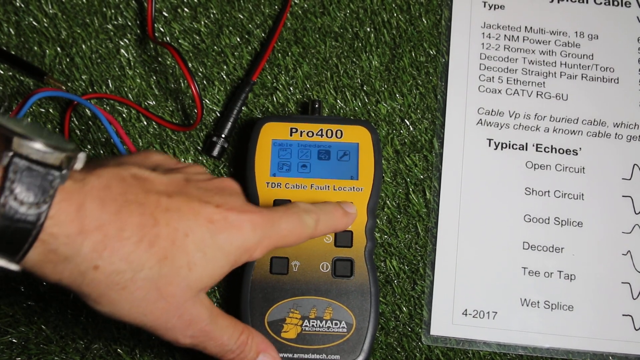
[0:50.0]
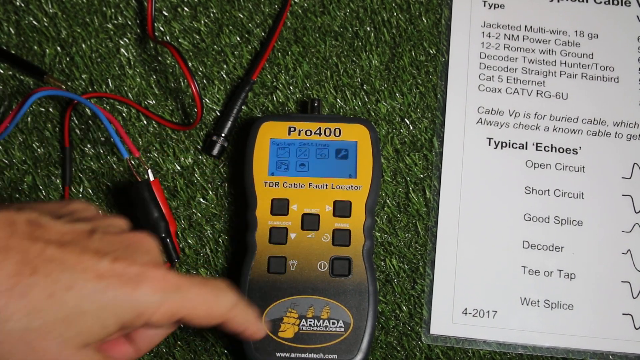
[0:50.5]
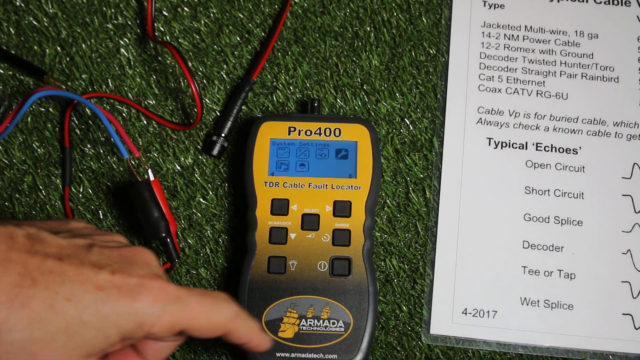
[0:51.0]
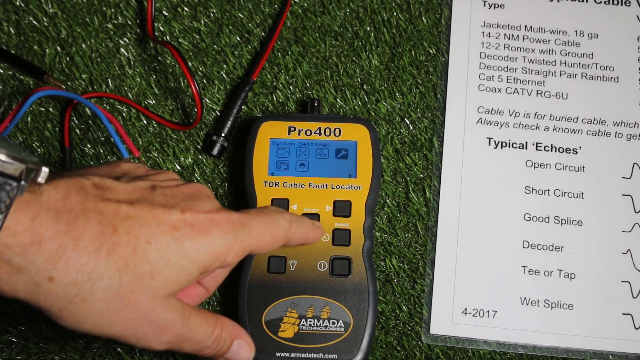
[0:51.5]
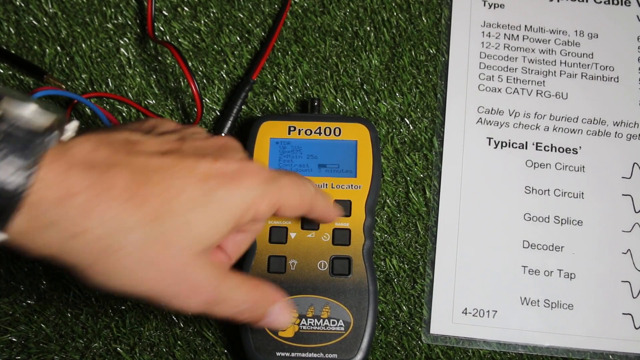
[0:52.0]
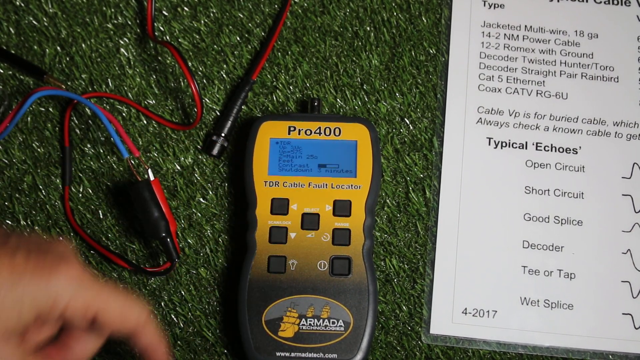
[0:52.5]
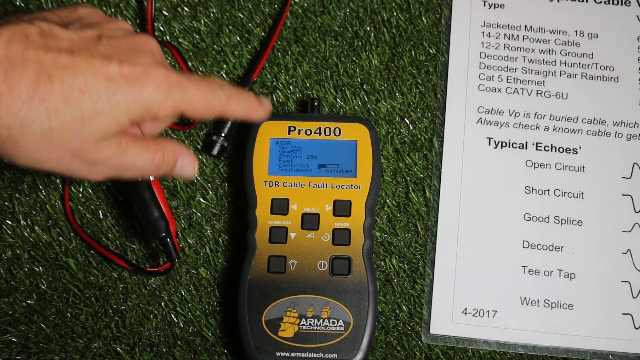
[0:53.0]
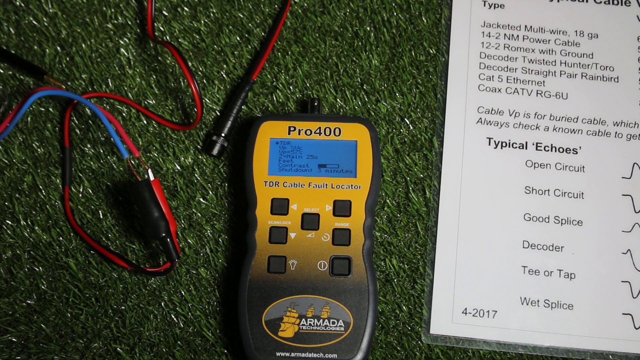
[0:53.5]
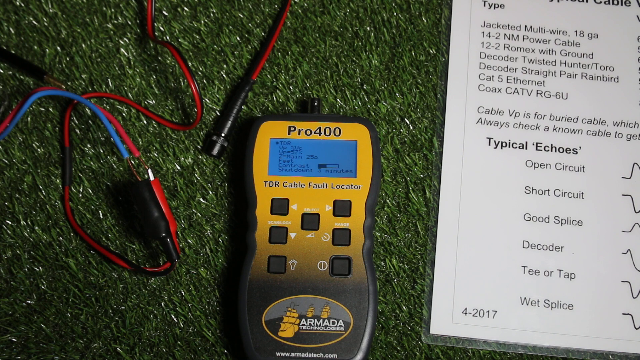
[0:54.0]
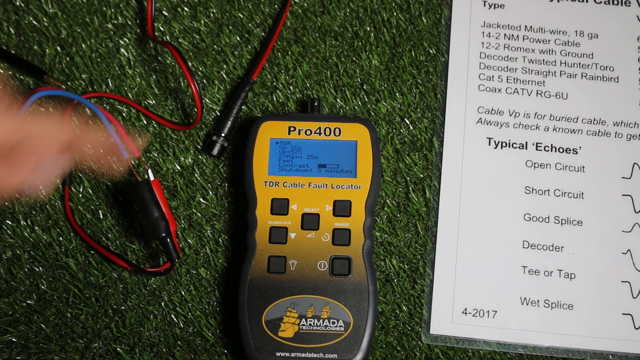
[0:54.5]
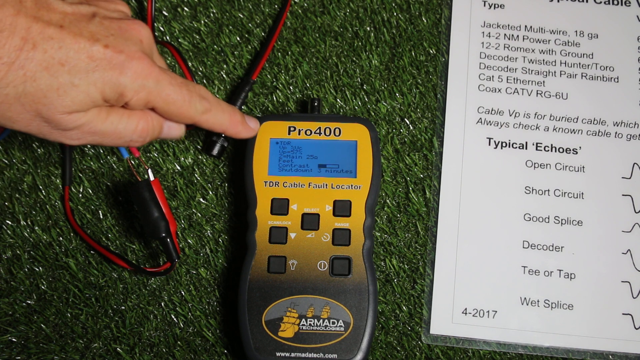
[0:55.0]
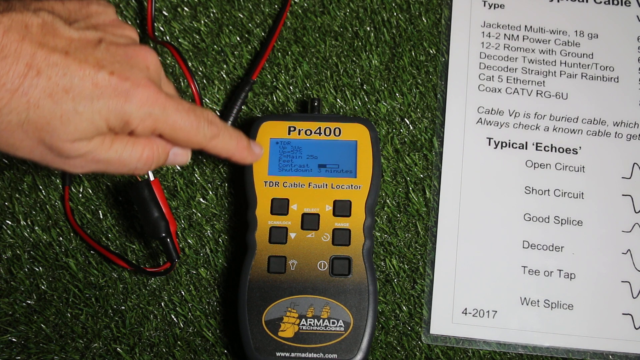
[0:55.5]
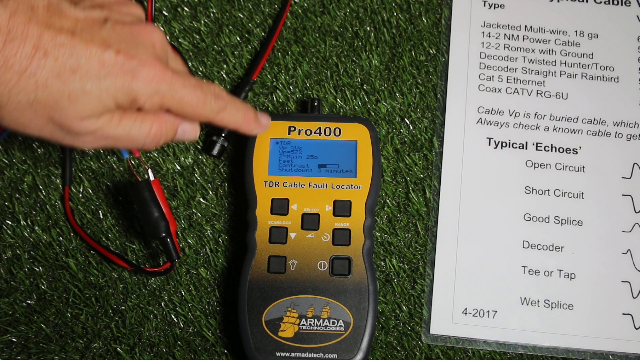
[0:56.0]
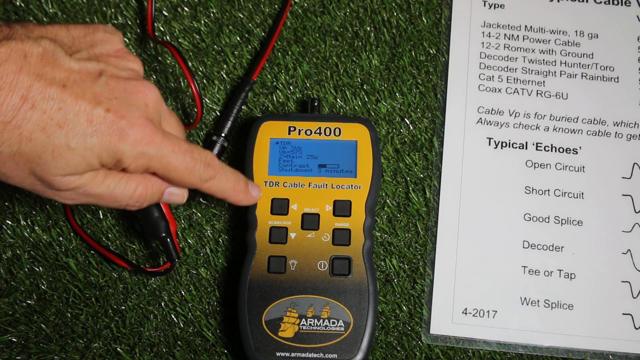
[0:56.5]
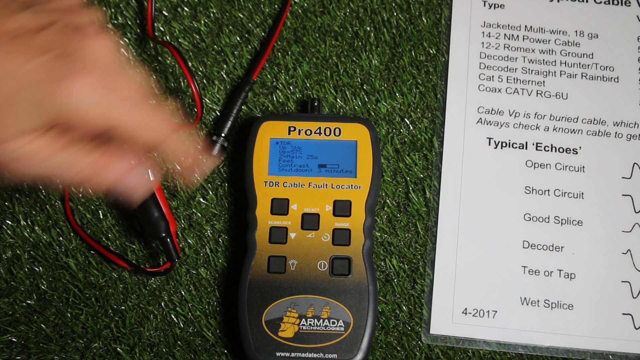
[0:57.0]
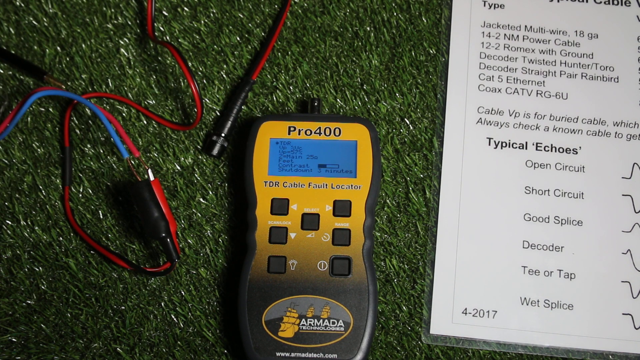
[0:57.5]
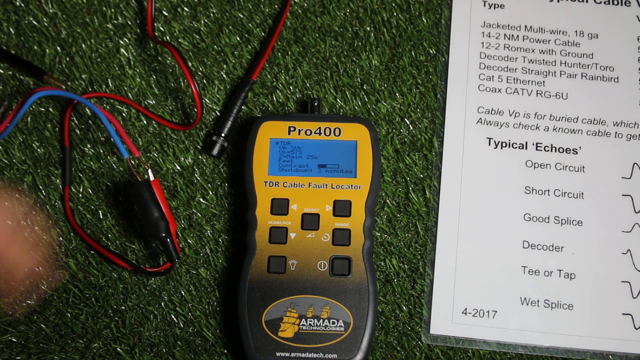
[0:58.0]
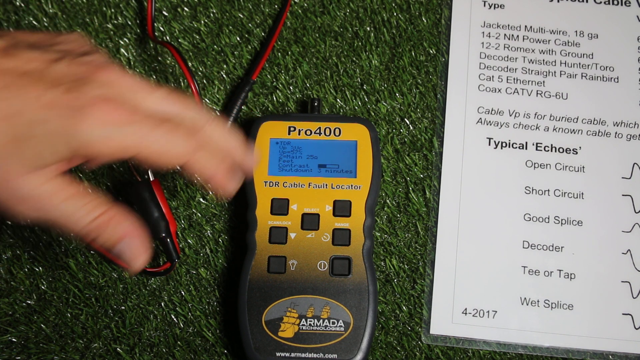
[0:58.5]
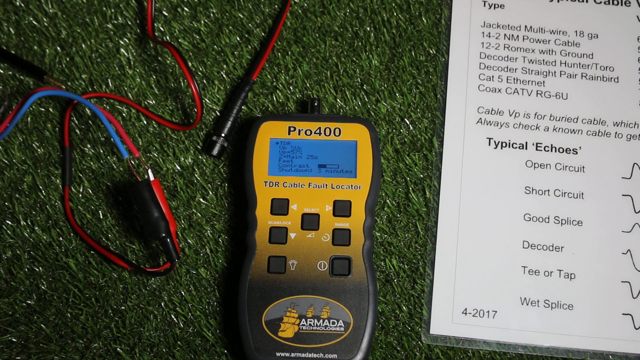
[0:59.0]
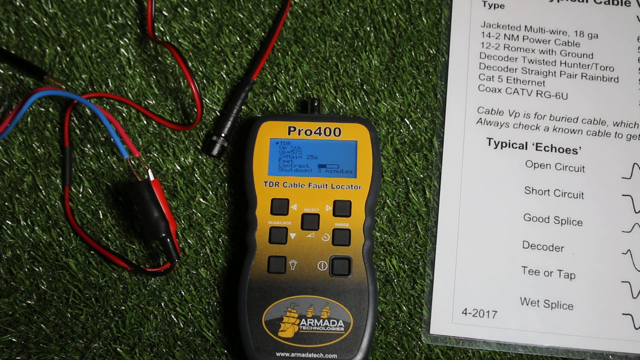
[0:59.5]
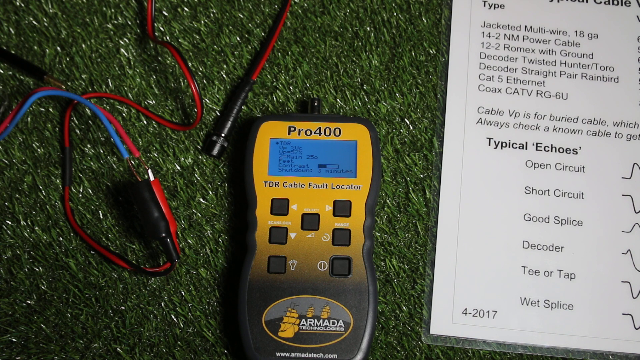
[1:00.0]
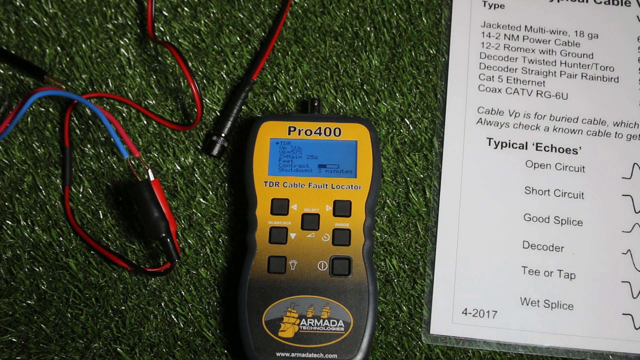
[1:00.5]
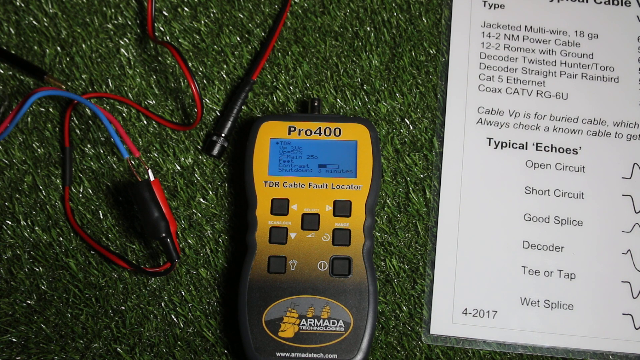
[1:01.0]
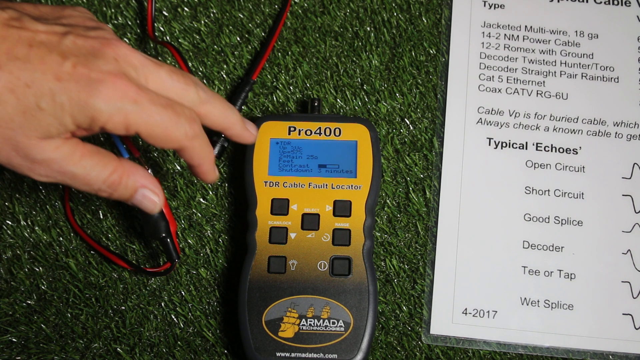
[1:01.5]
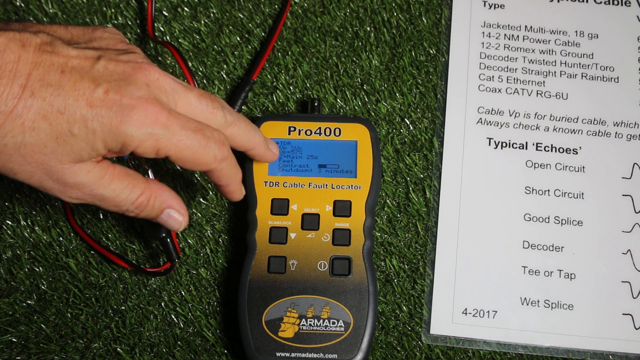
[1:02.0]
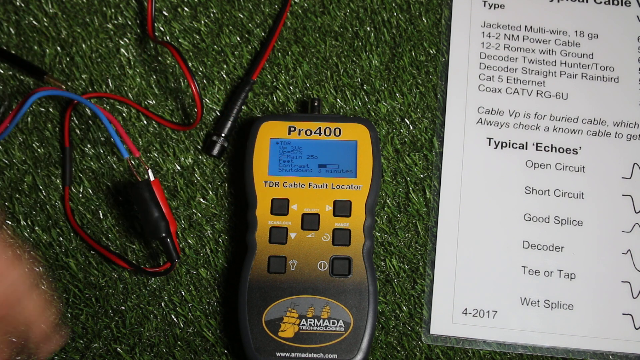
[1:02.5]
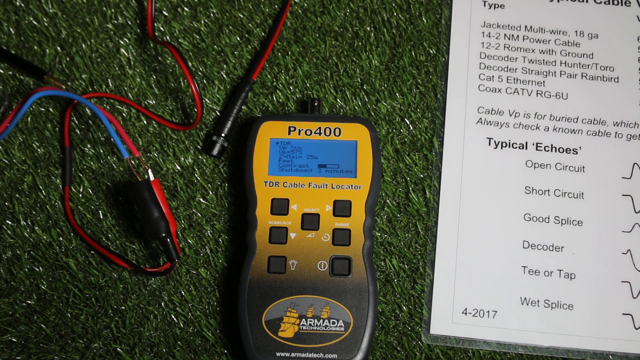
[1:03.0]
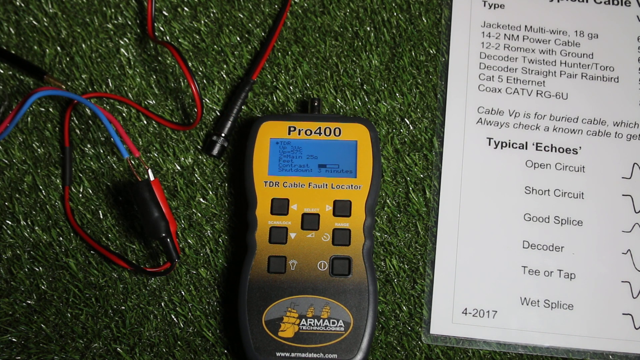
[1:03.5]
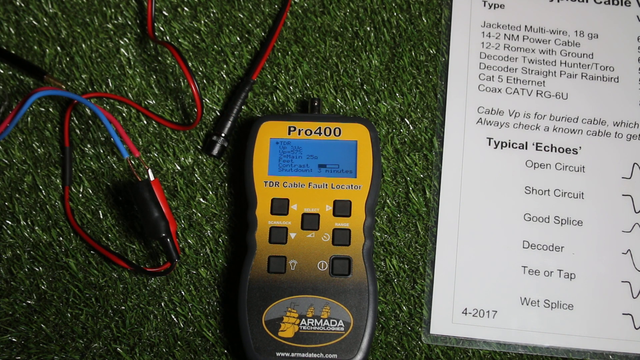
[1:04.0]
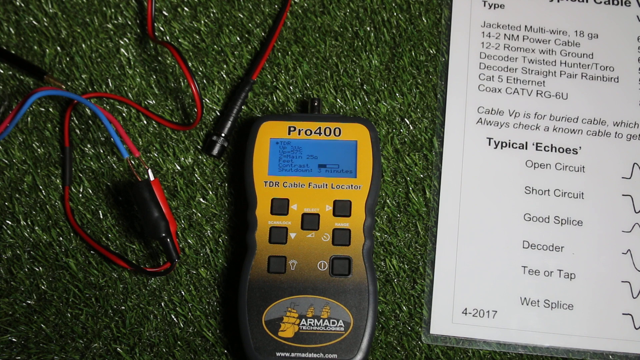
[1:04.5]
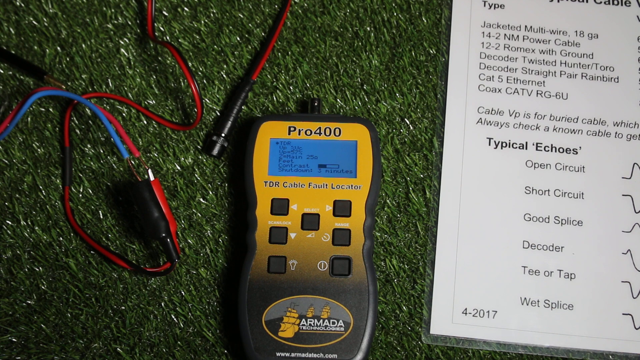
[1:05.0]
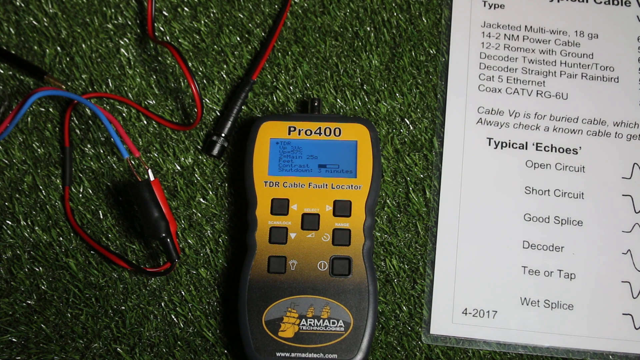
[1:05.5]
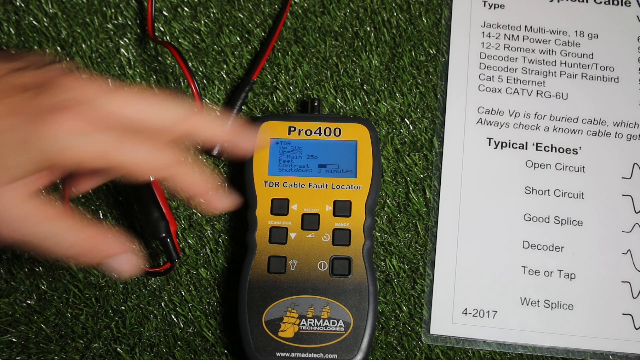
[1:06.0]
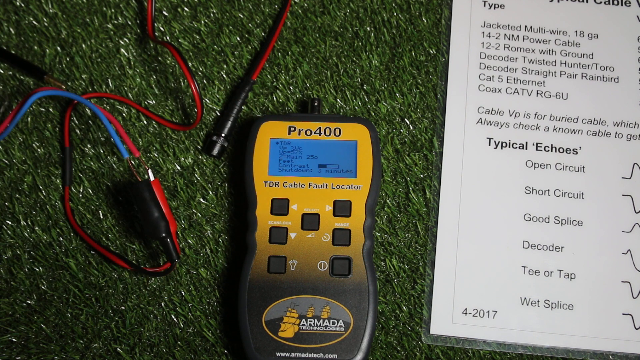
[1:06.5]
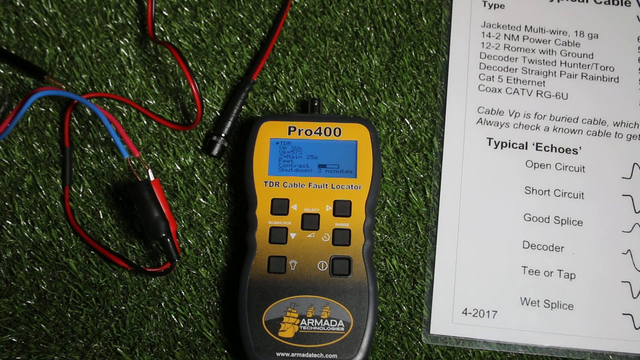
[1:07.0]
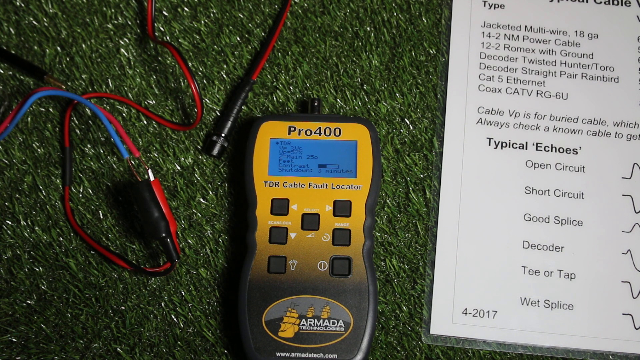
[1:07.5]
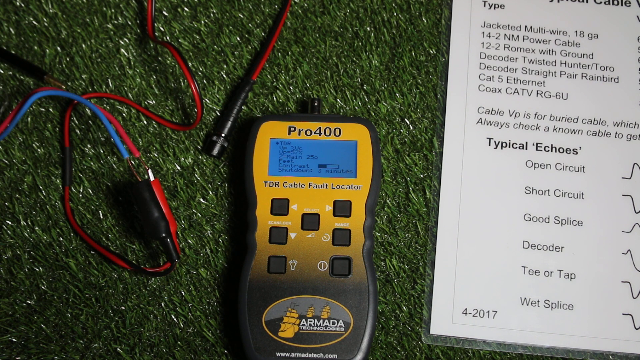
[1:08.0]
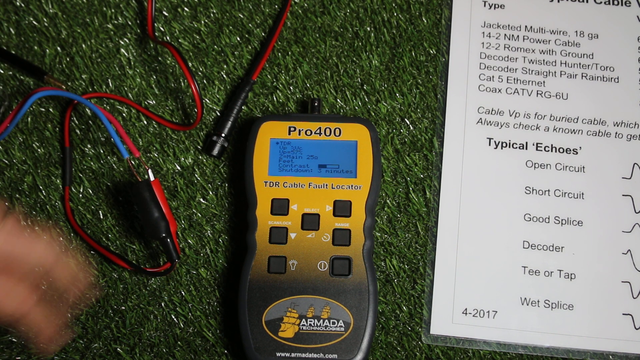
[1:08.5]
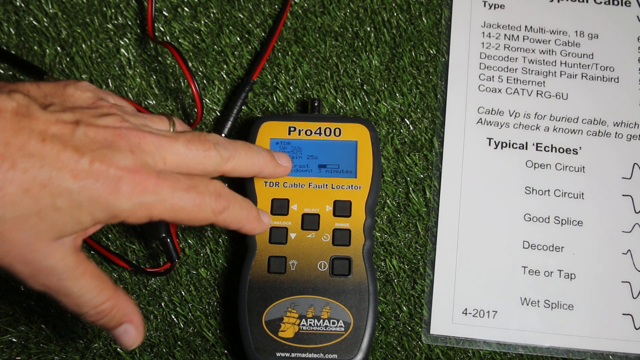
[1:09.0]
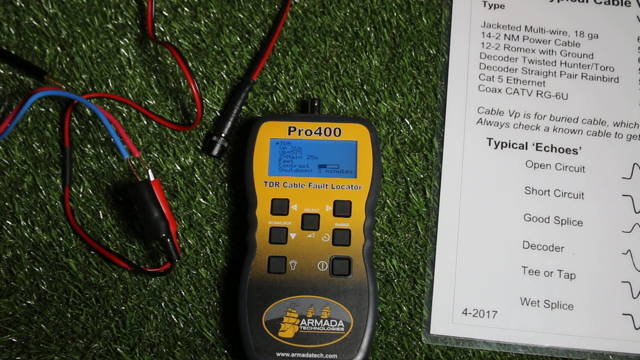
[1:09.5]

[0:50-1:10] A man's left hand pushes buttons on a yellow monitor called the Pro 400. He pushes the upper right button, then the middle button, and runs his index finger along the top to the left of the screen. The screen is now illuminated. He puts his hand back, then touches the screen with his middle finger, does the same thing again, and then a third time. A wire lays to the left of the Pro 400; part of it is blue, most of it is red, and it has a black connector piece. The device lays on what looks like artificial turf grass. On its right side is a black and white typed paper that says "typical echoes" and has a diagram and a name for each echo.